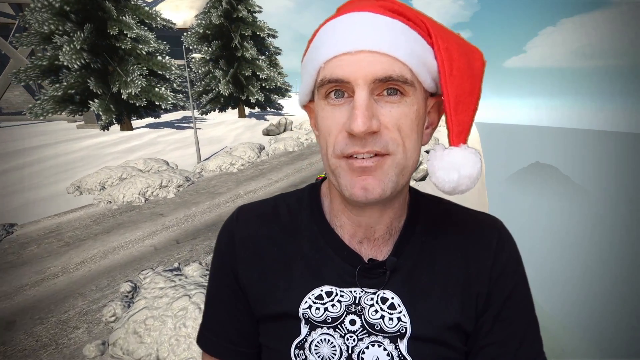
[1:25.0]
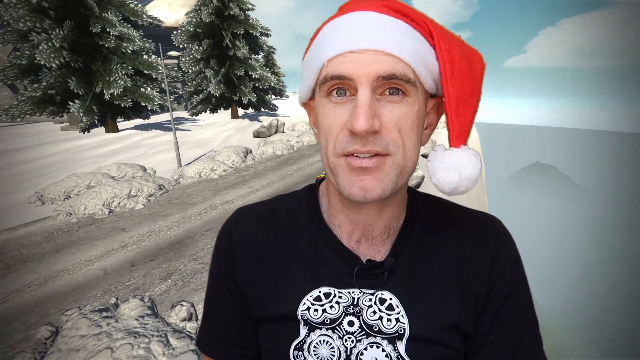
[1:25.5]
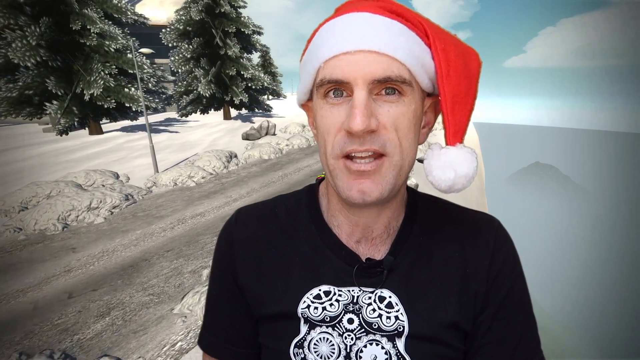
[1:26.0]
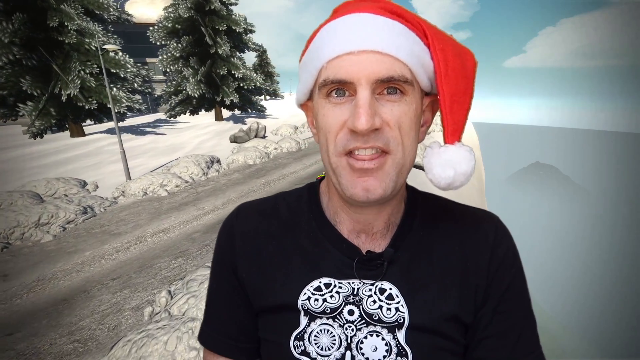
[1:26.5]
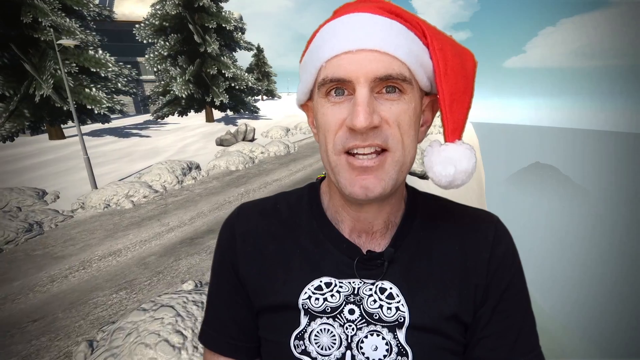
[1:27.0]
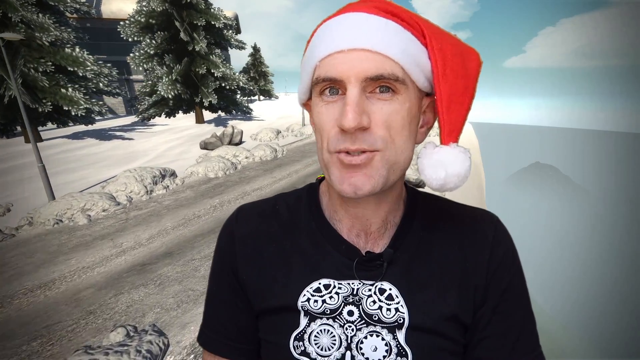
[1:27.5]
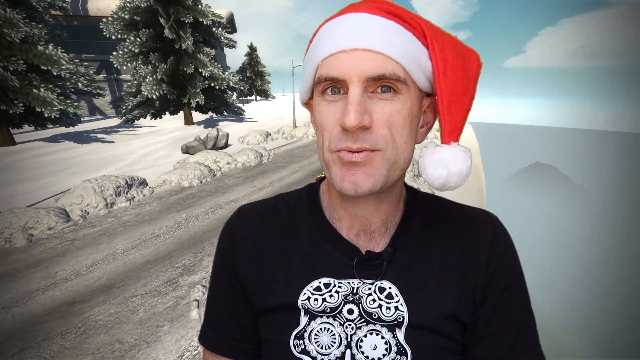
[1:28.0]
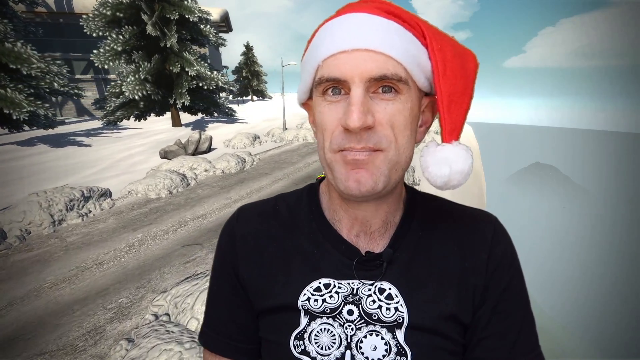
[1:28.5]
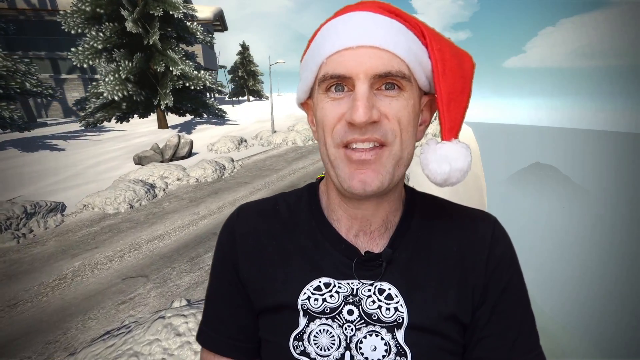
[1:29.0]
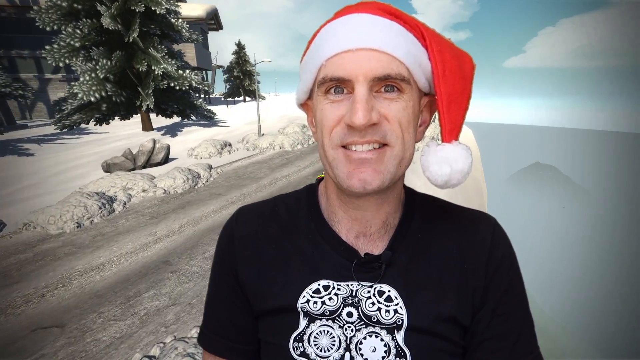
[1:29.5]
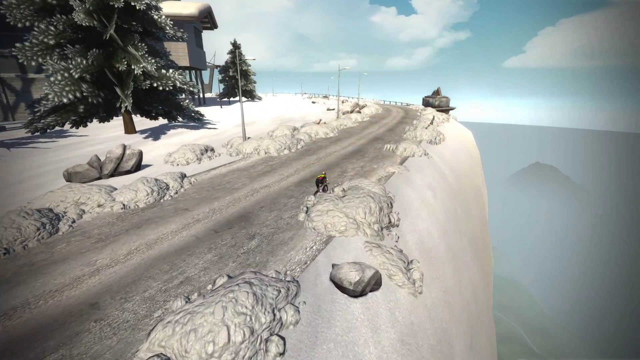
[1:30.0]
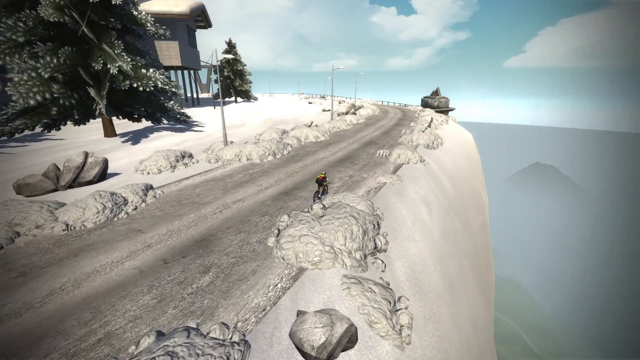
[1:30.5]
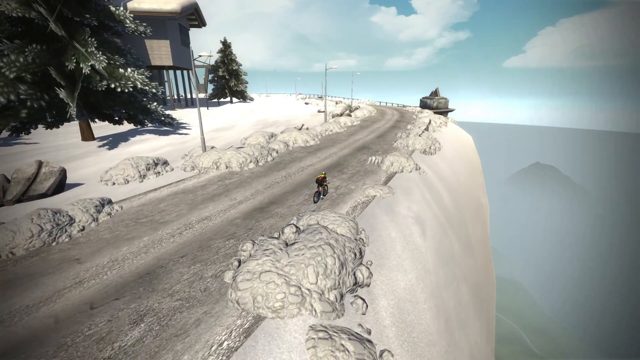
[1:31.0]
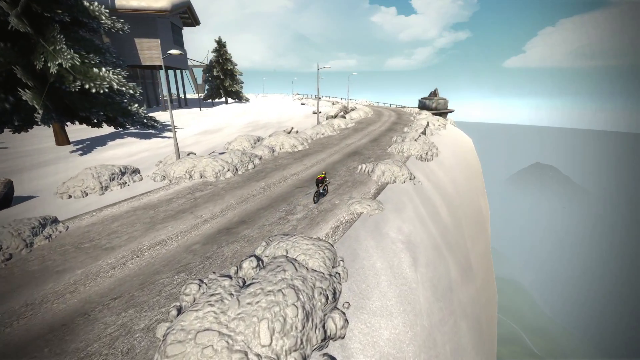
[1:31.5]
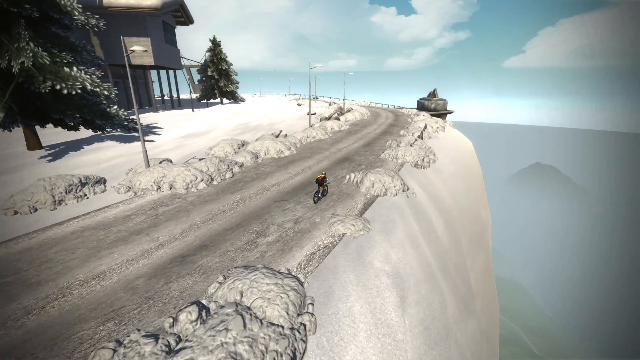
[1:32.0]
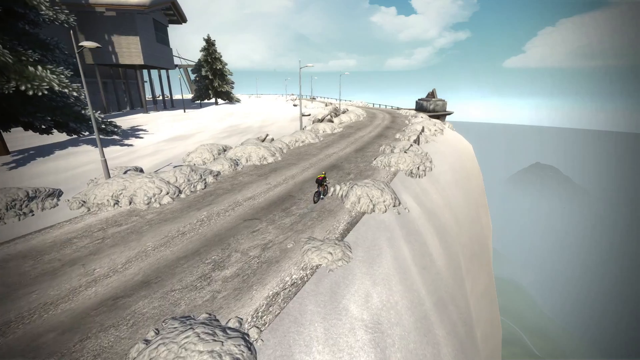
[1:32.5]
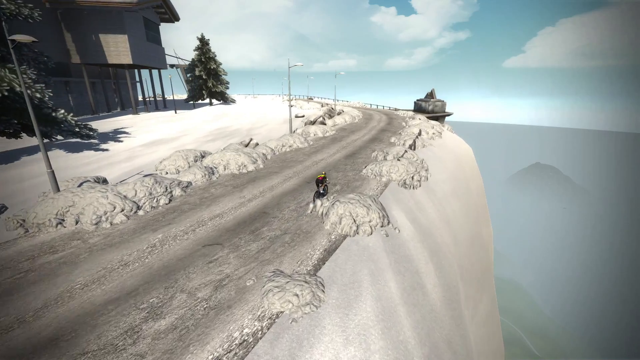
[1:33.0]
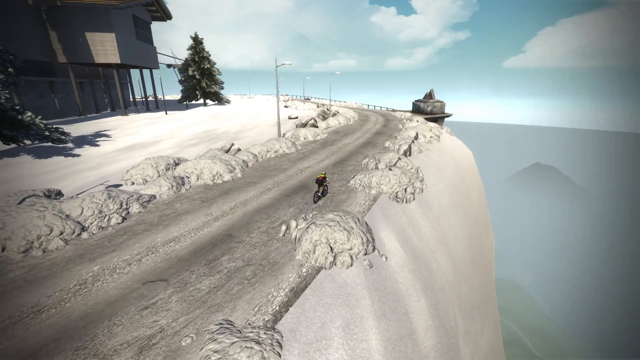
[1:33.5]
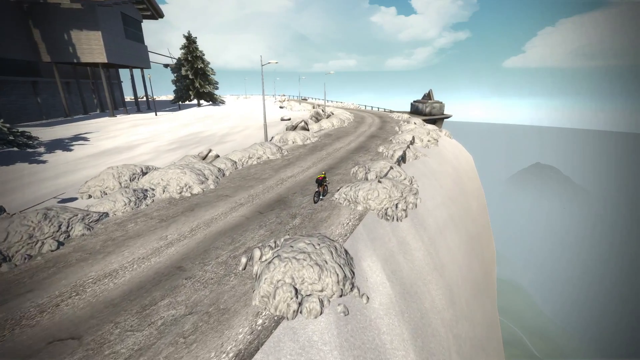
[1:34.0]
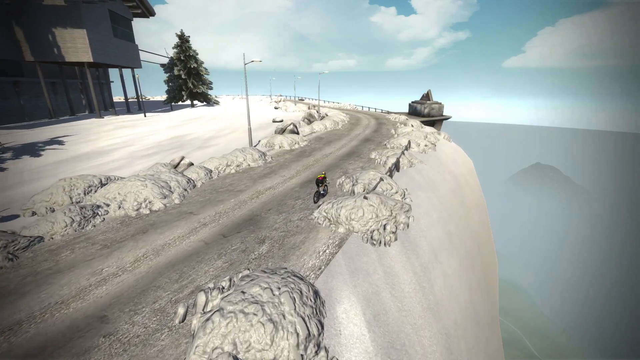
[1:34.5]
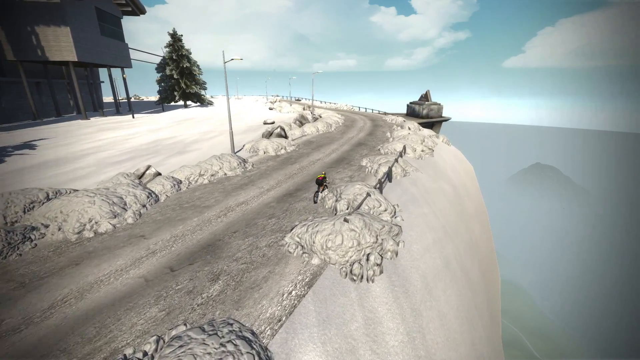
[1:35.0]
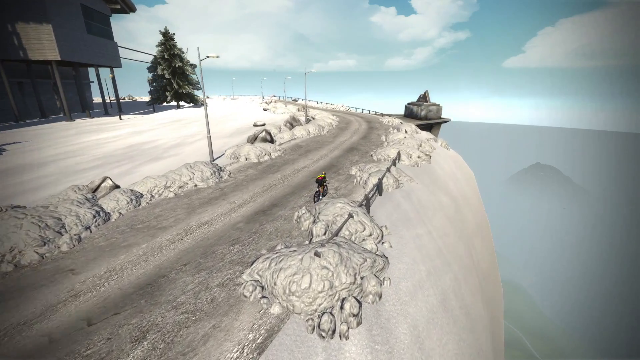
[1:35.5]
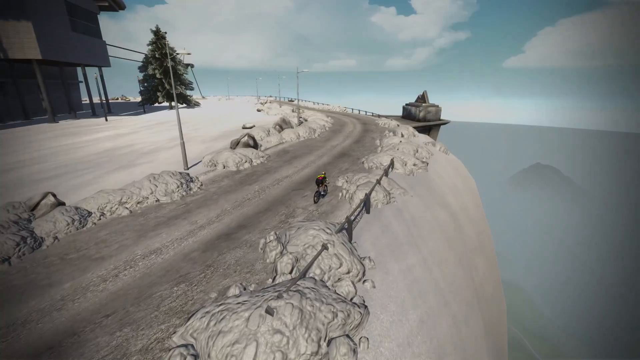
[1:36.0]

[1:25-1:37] The presenter continues speaking briefly, then the typical YouTube end-screen buttons appear. One button shows what is apparently the channel's profile picture, a stylized drawing of a llama. Another button on the side shows a playlist of 276 videos titled "Zwift tips". As these appear, the green-screened man fades out, and for a few seconds only the b-roll remains: a biker going up a snowy road, which, now clearly visible, appears to be computer-generated rather than drone footage.